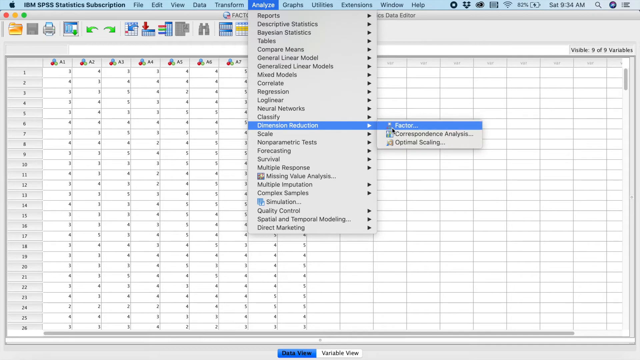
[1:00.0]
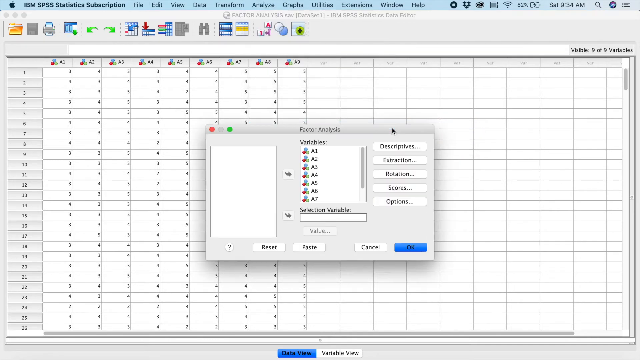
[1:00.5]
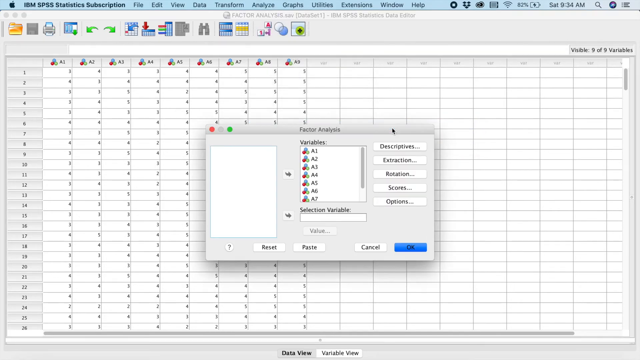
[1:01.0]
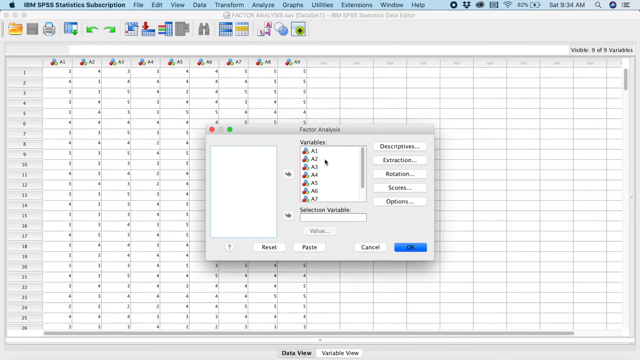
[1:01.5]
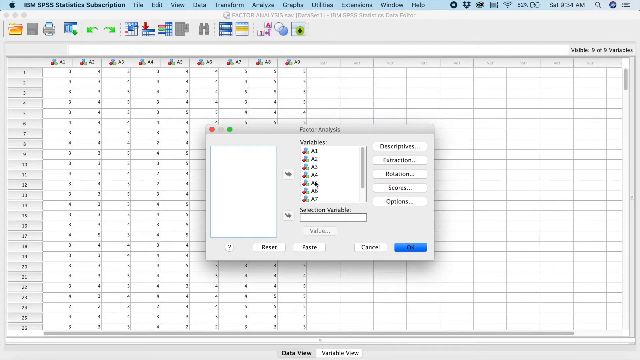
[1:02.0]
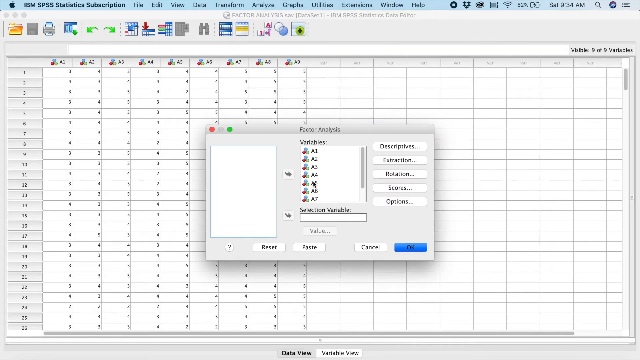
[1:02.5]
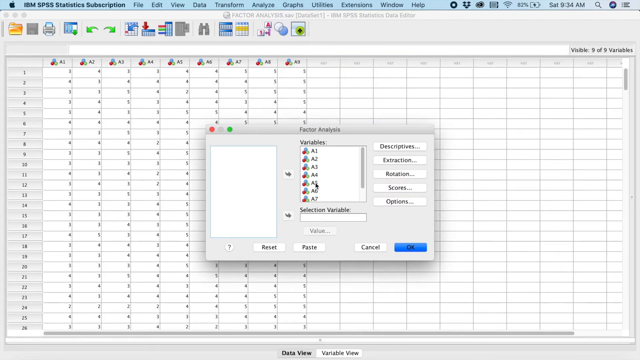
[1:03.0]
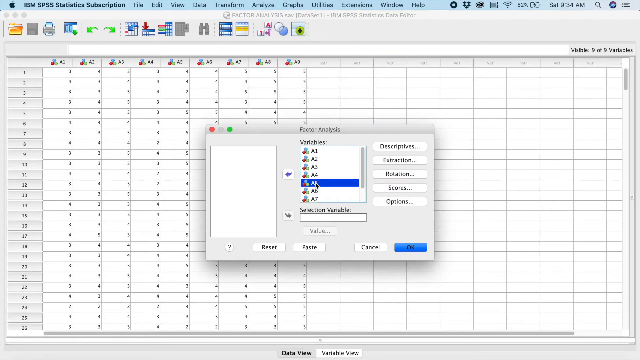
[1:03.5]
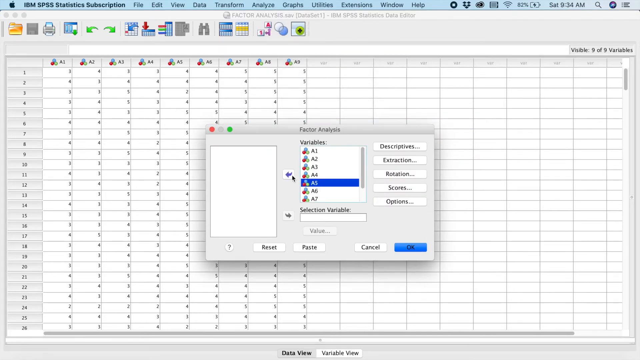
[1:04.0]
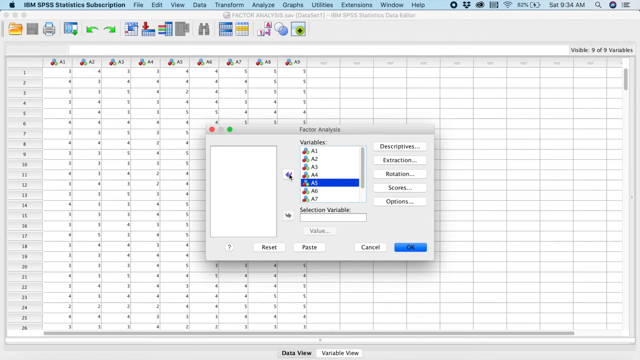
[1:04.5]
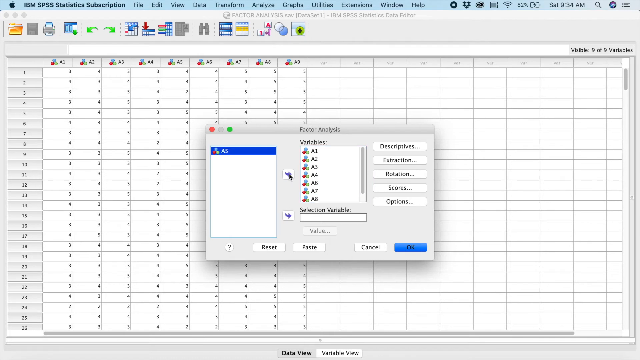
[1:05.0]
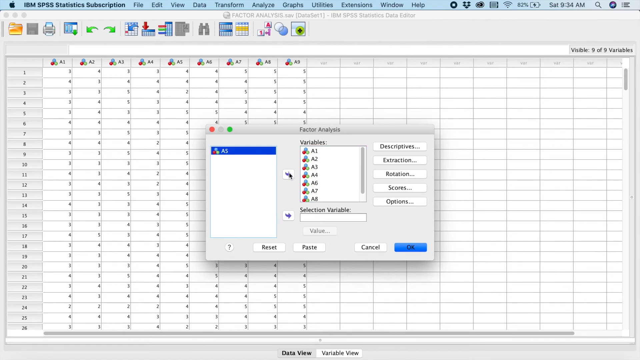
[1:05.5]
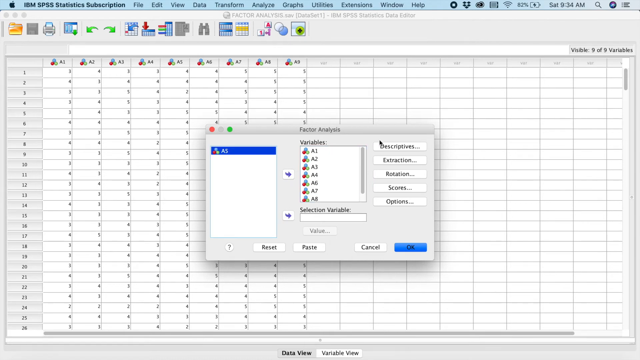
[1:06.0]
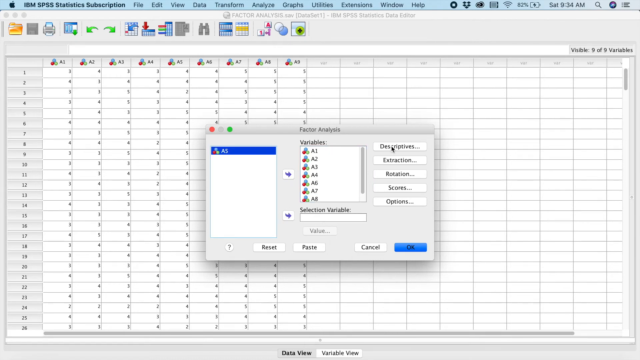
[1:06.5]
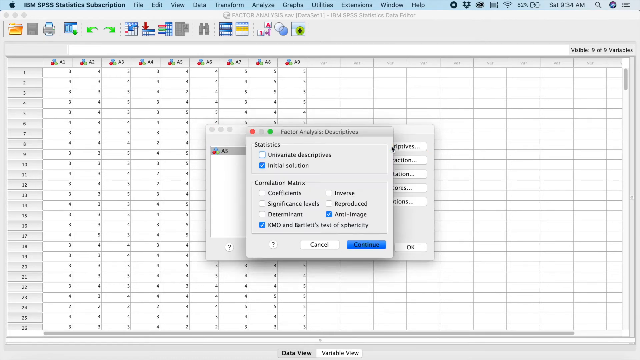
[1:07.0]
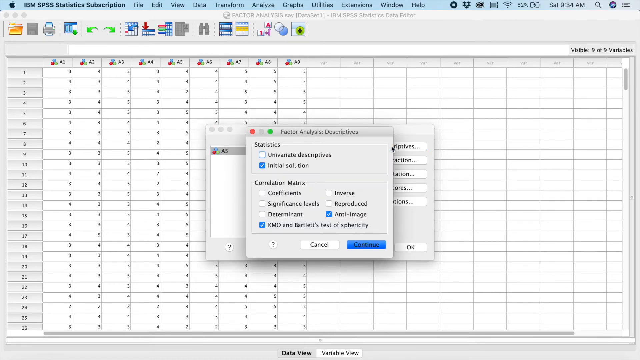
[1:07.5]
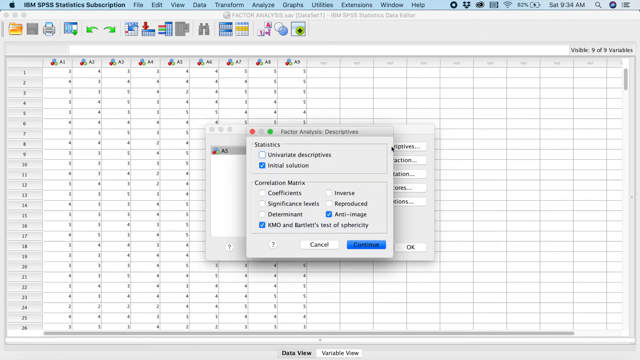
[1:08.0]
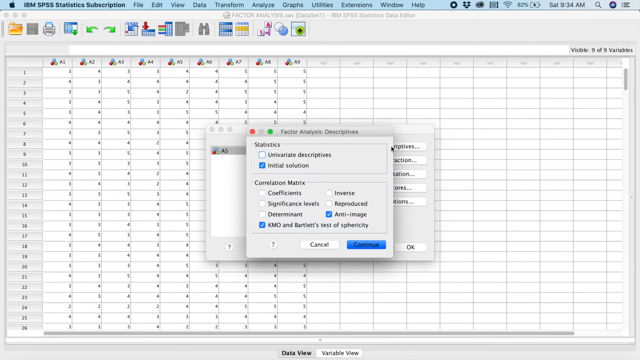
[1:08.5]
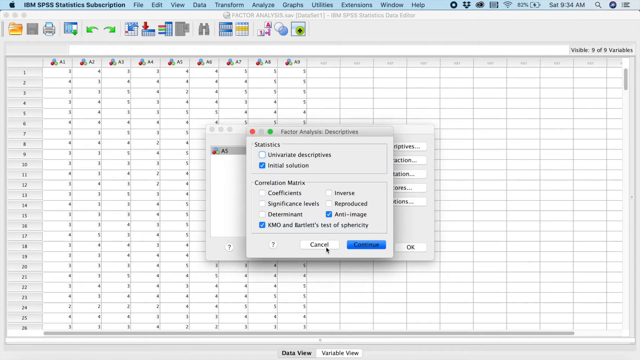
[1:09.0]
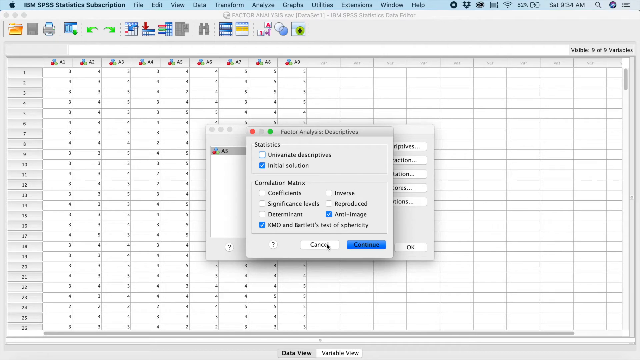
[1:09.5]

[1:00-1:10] An Excel window is on screen, and the operating system appears to be macOS. The top of the window toolbar reads "SPSS statistics subscription". To the right are tabs which, from left to right, read "file", "edit", "view", "data", "transform", "analyze", "graphs", "utilities", "extensions", "windows", "help". Below them are various icons, and below those is the chart itself, numbered from 1 to 26, with values on the y-axis ranging from A1 to A5. A pop-up window titled "factor analysis" is in the middle of the screen. Buttons on its right side read "descriptives", "extraction", "rotation", "scores" and "options". On the left side is a screen with variables, below which it reads "selection variable", and to the left of that is an empty white rectangle.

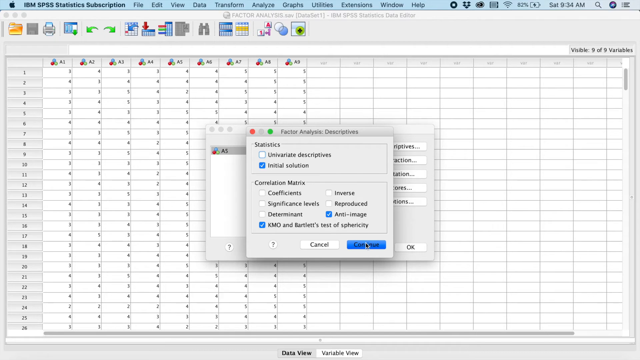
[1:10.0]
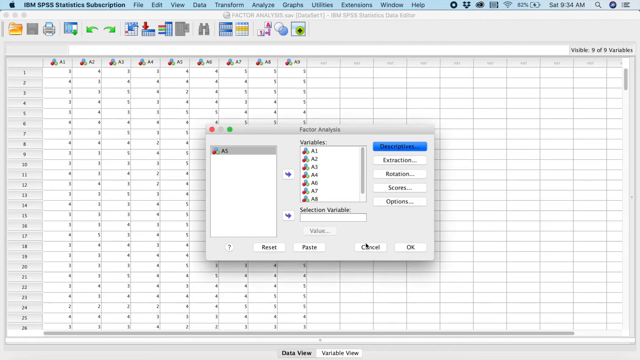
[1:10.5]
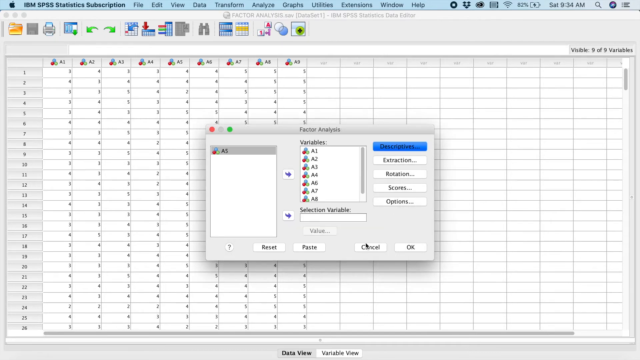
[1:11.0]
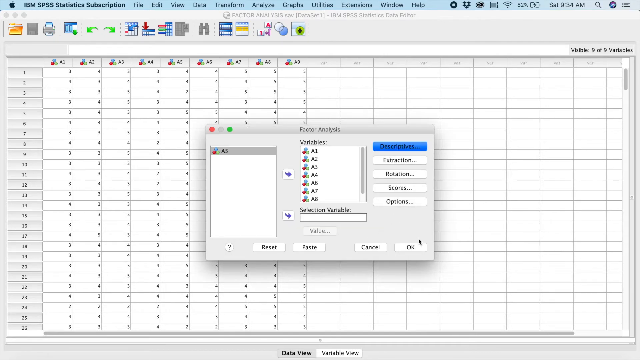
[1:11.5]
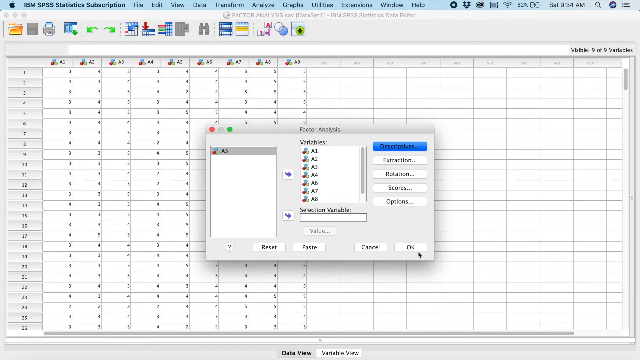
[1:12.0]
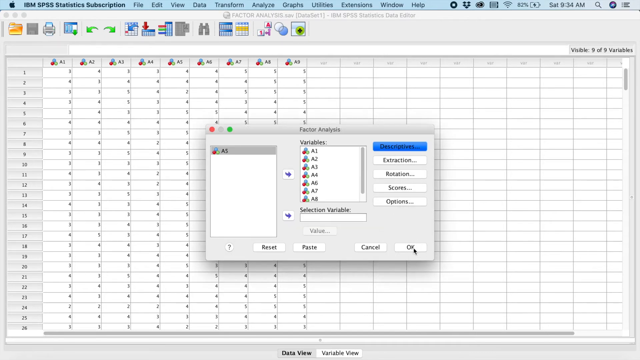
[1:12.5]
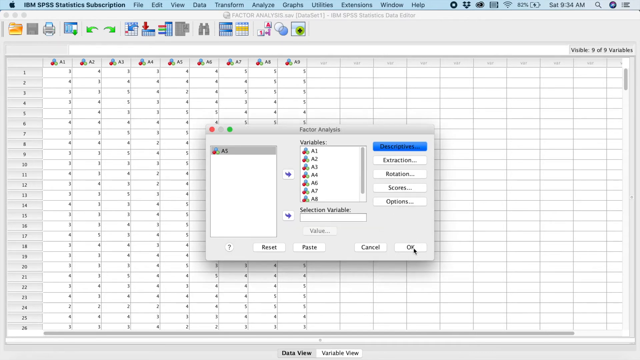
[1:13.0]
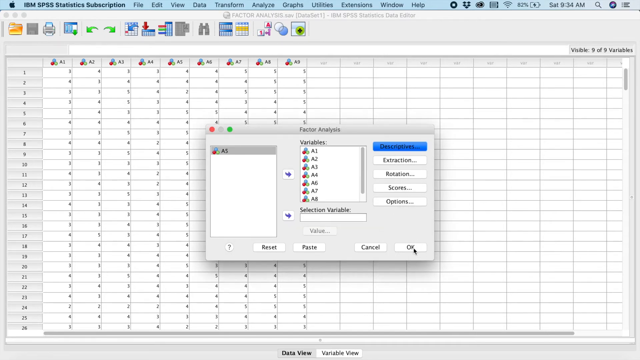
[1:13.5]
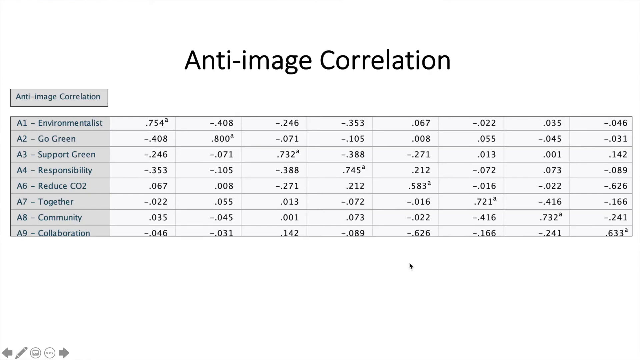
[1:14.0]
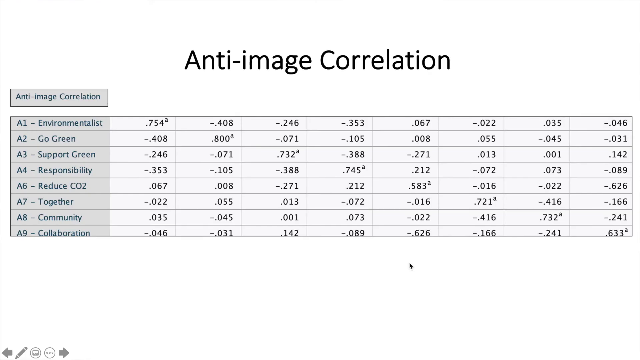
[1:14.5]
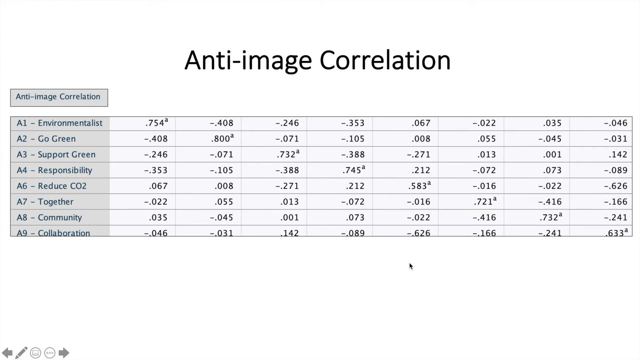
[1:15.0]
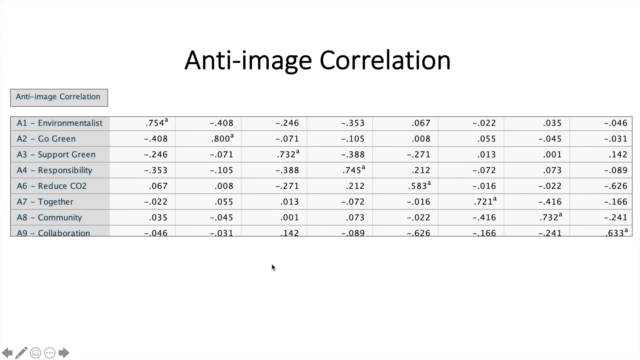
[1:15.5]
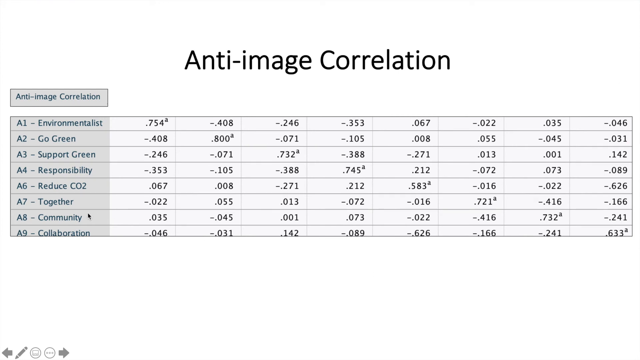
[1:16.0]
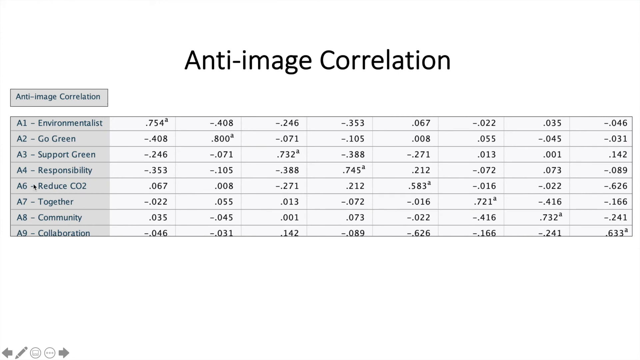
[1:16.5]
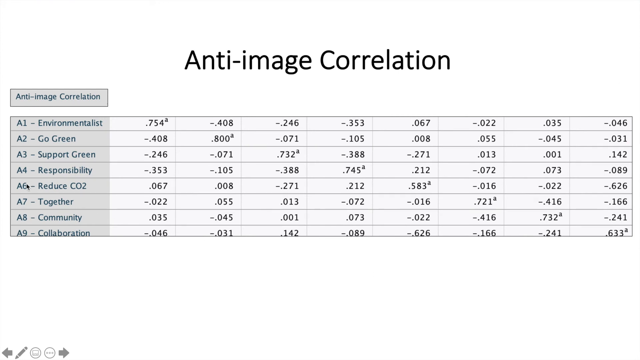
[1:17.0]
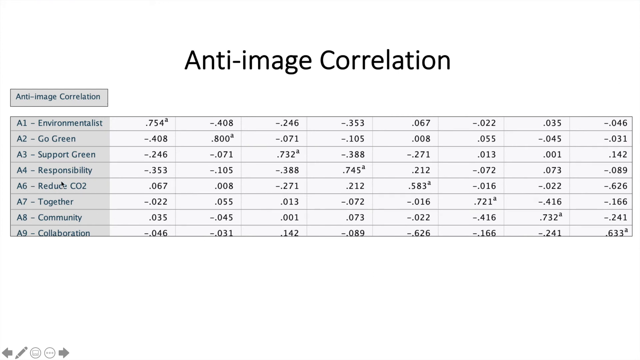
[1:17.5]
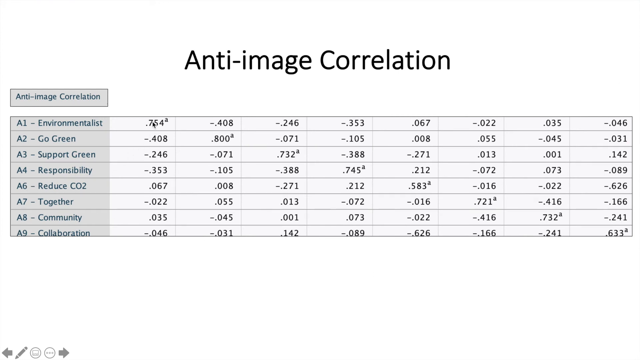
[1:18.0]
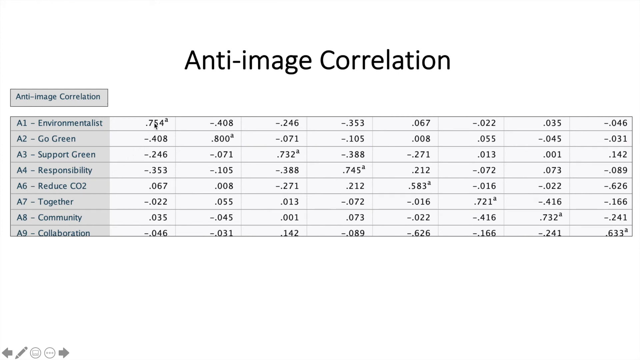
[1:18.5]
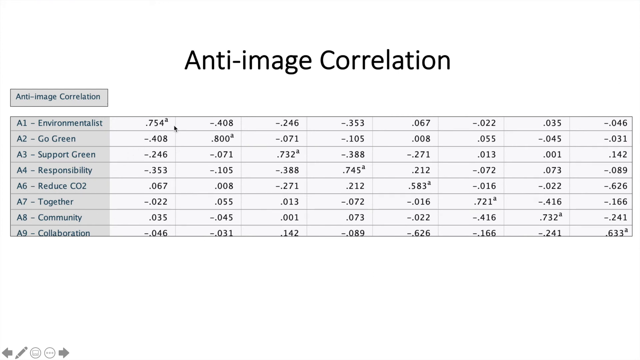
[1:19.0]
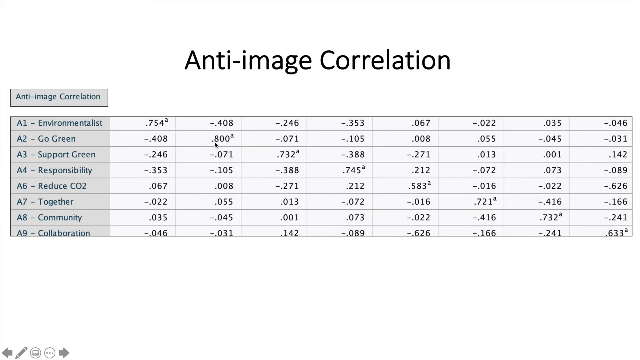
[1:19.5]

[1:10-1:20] A window is open that appears to be a data input program. Two pop-ups are open, one overlaid on top of the other. The top pop-up is titled "Factor Analysis Descriptive" and has various options. Under statistics it lists "Variate Descriptive" and "Initial Solution"; below that are "Correlation Matrix", "Coefficients", "Significance Level", "Determinant", and "KMO and Bartlett's Test of Sphericity". Options to the right read "Inverse", "Reproduced" and "Anti-Image". Below these are "Cancel" and "Continue" buttons. The cursor clicks "Continue", then clicks OK on the other pop-up.